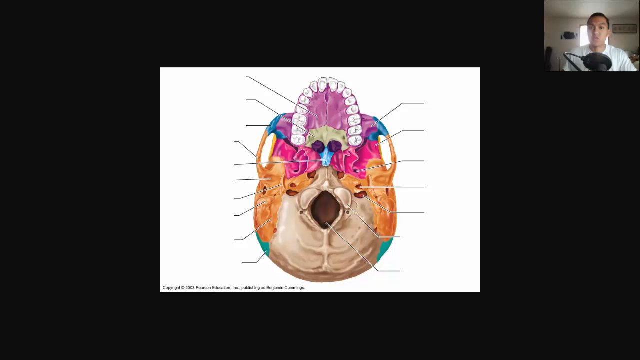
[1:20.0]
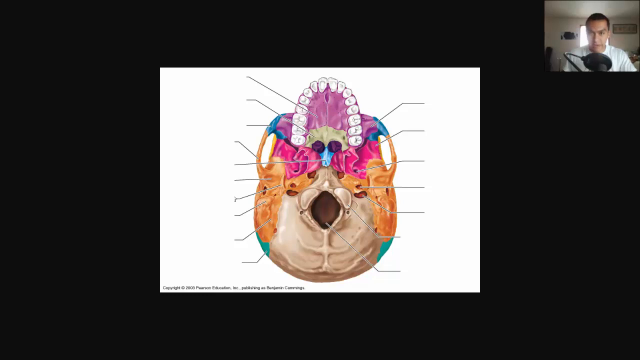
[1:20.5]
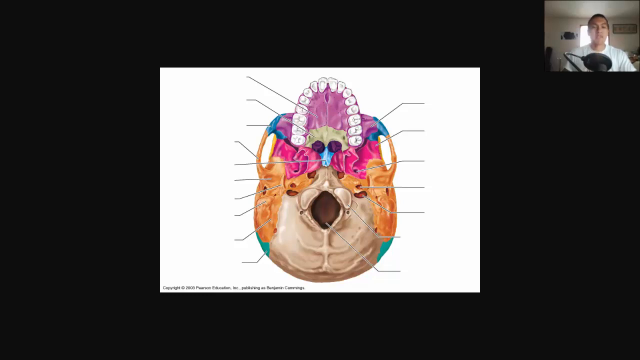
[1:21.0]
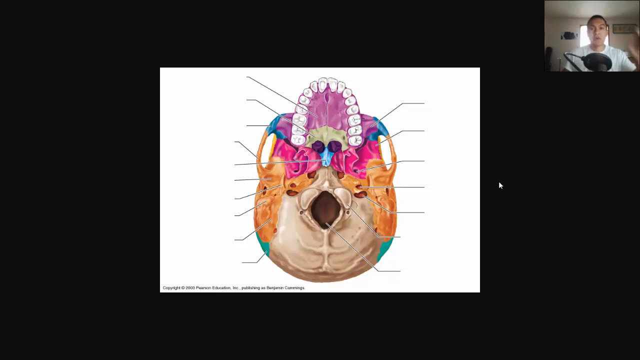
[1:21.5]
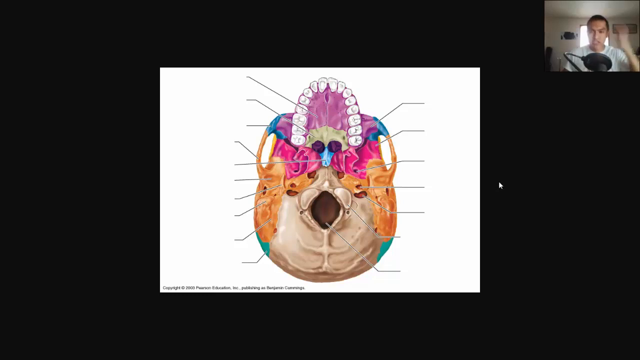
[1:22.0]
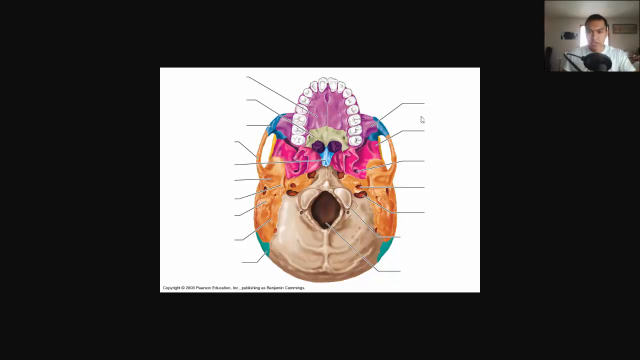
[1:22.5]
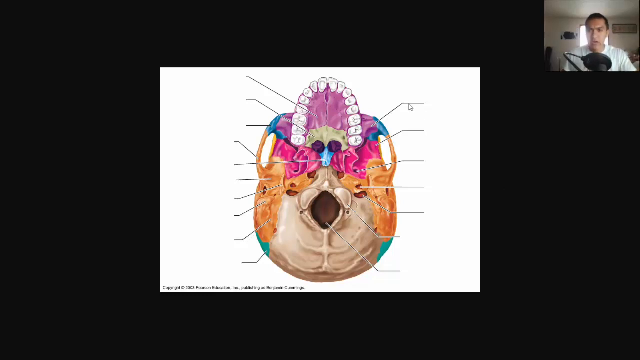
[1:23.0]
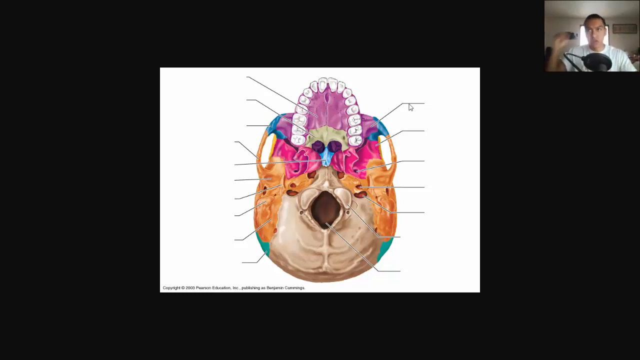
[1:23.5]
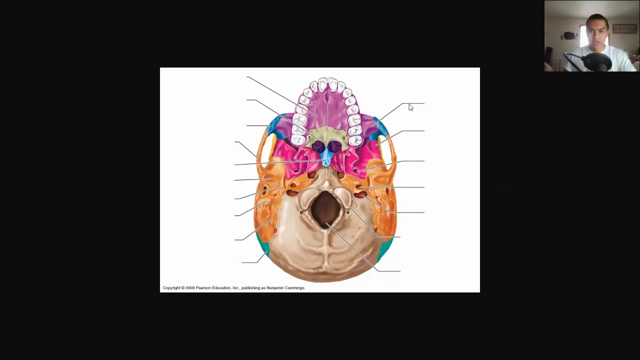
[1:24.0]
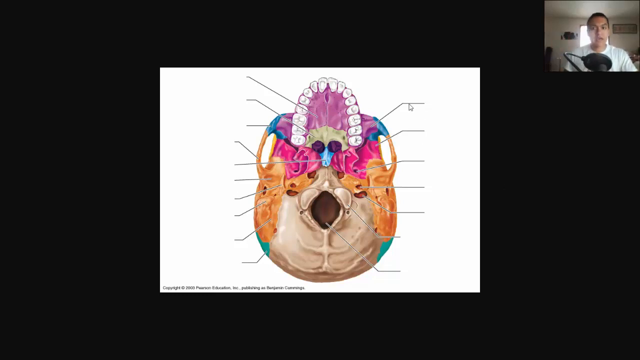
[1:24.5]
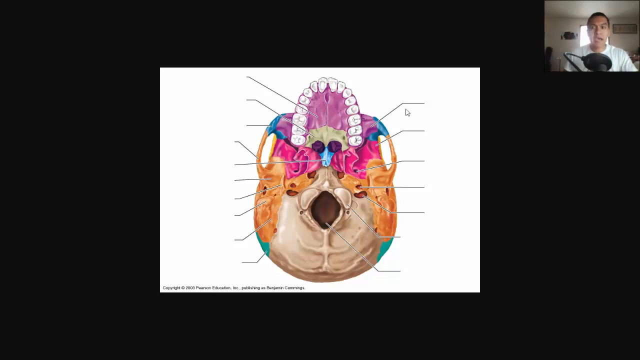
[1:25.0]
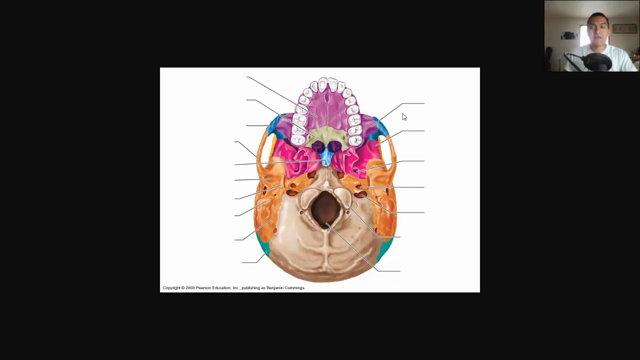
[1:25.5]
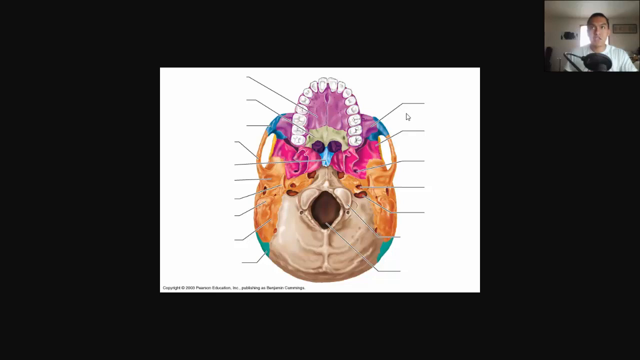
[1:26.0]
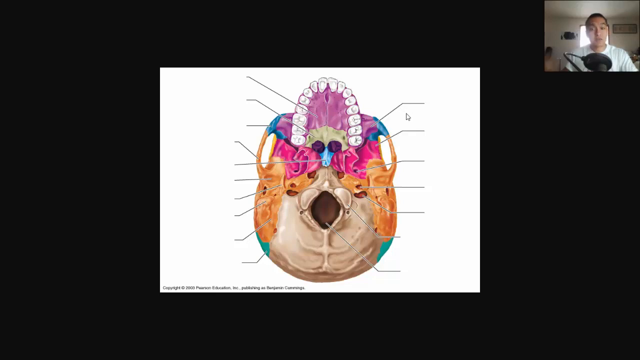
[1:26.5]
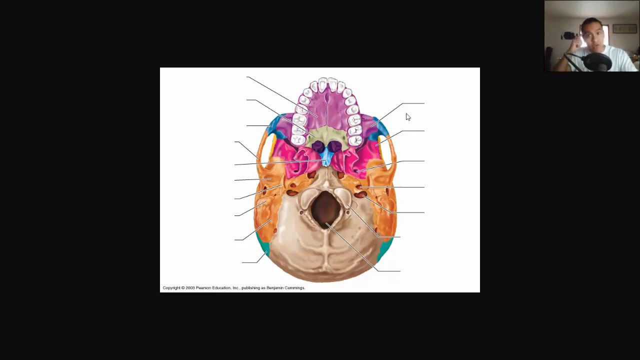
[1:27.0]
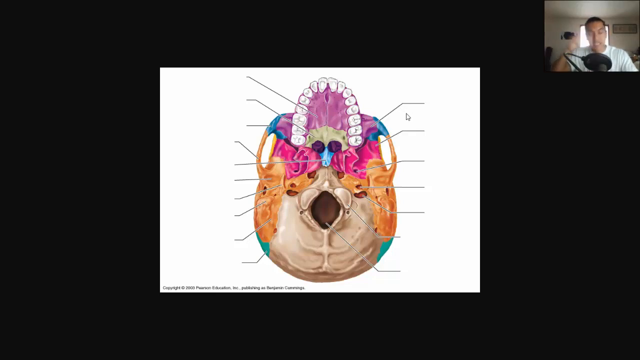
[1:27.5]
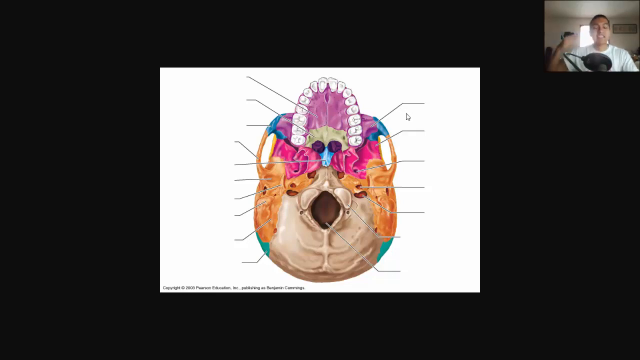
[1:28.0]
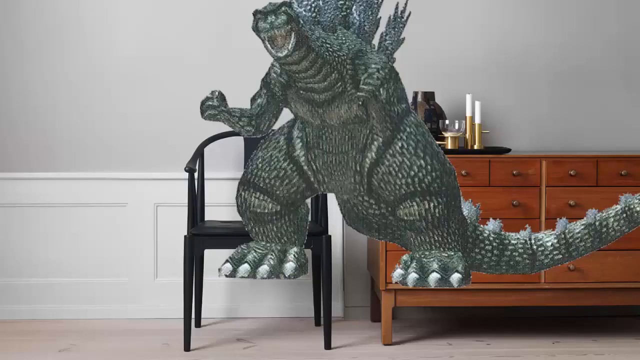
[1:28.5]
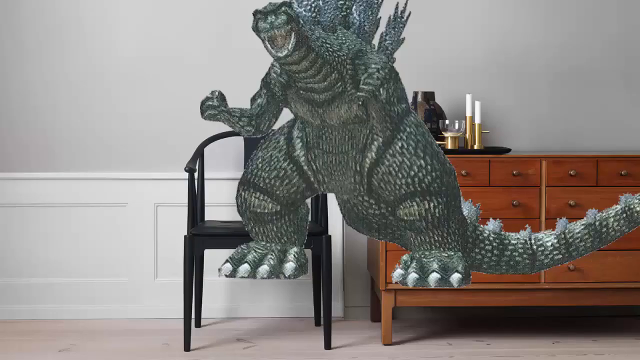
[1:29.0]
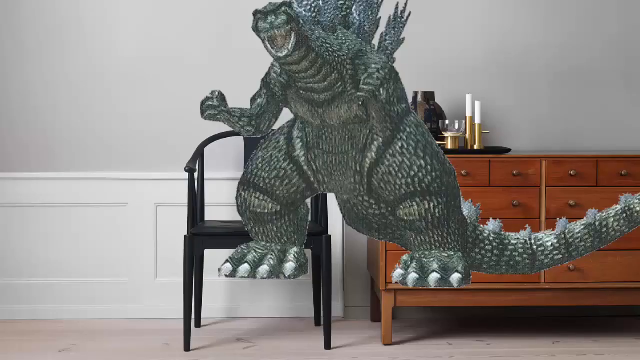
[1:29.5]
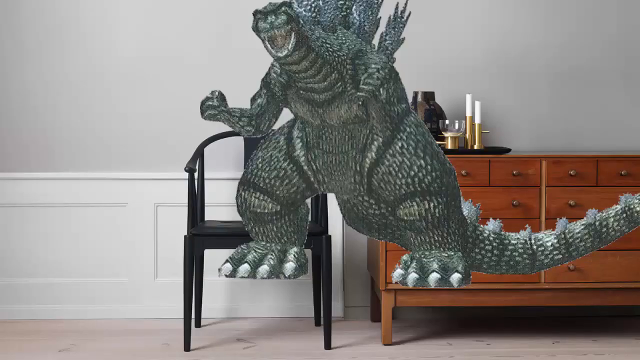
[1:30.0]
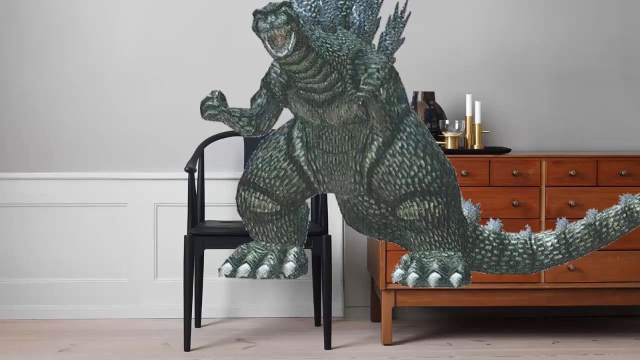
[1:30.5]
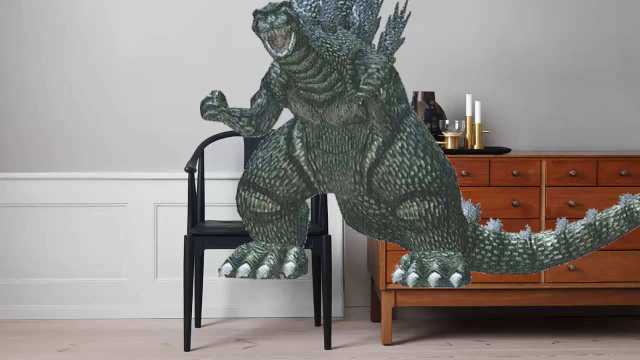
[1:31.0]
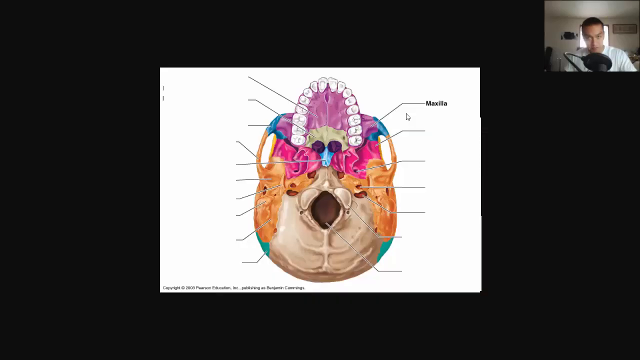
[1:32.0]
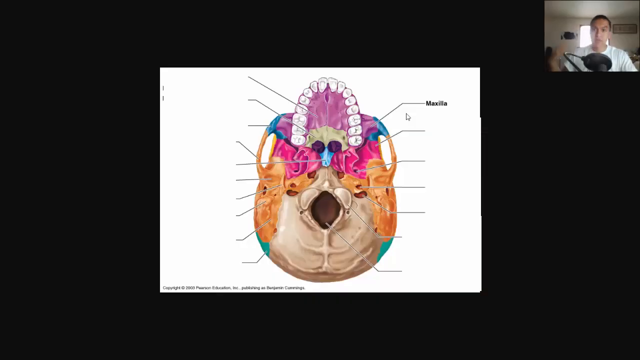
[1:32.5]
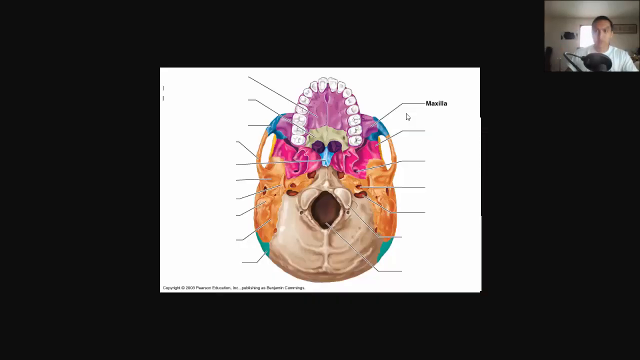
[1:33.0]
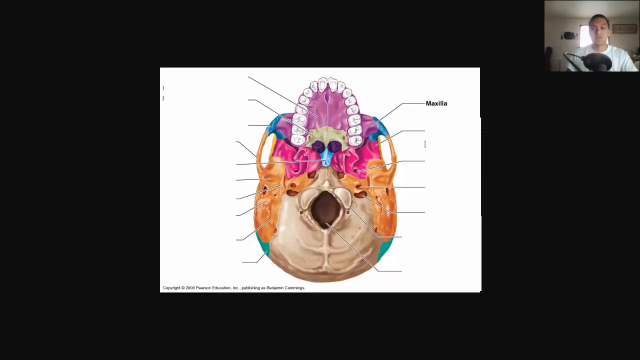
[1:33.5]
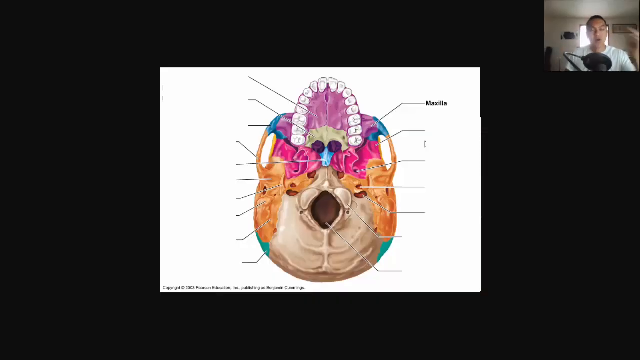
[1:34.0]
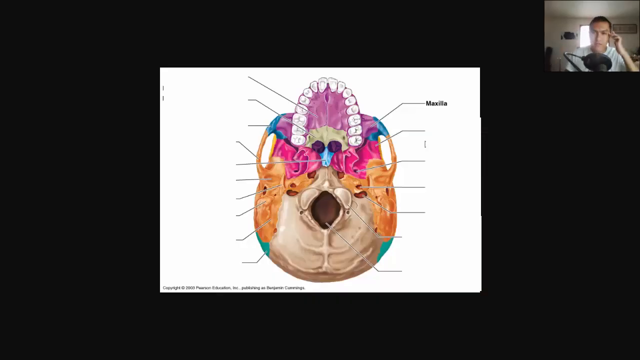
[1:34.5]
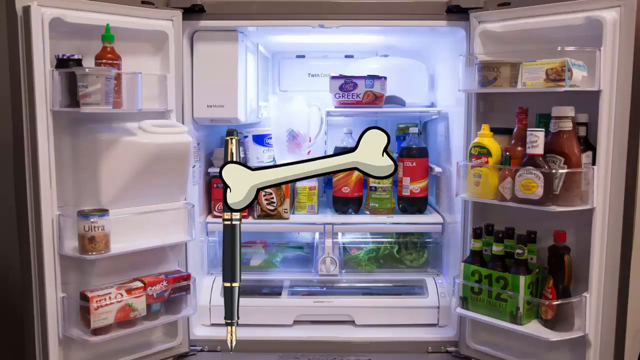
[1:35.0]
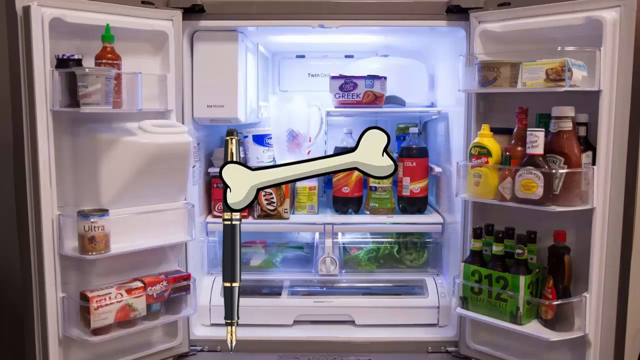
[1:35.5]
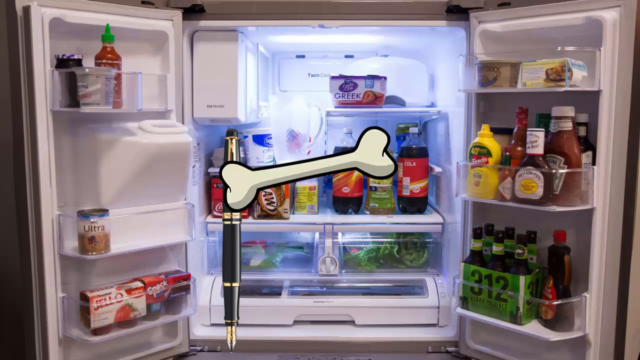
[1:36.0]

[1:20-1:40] The skull picture is shown with the labels for the bones removed, leaving only lines connected to each of the bones. It then switches back to the Godzilla picture, which apparently relates to memorizing parts of the skull. At the top right, the top right of the bottom skull is labeled "Maxilla." The picture of the pen connected to the bone is shown again, along with the refrigerator.